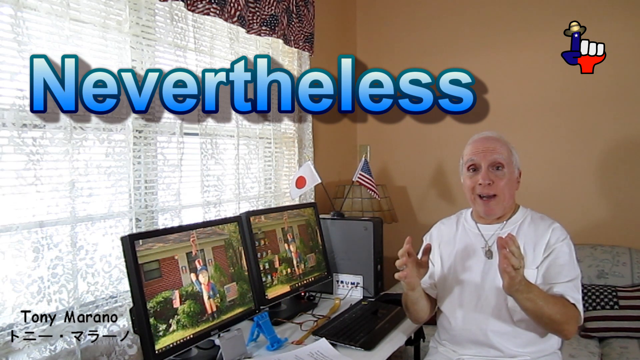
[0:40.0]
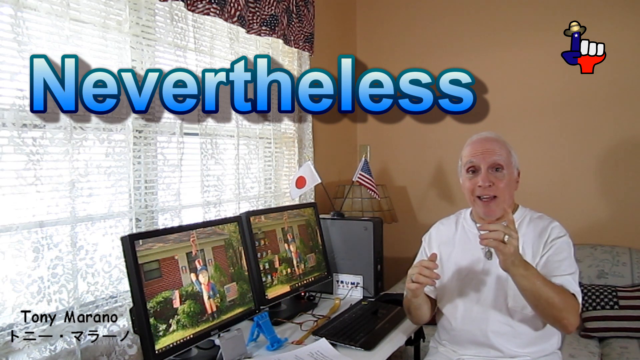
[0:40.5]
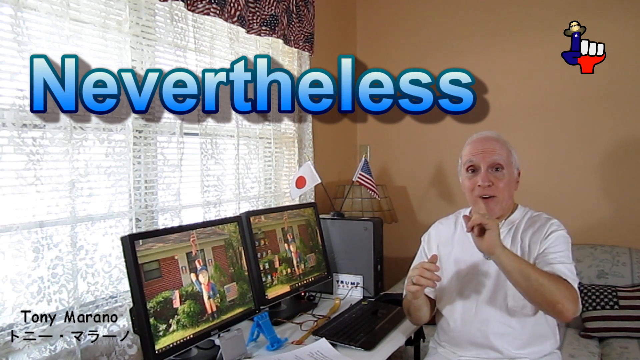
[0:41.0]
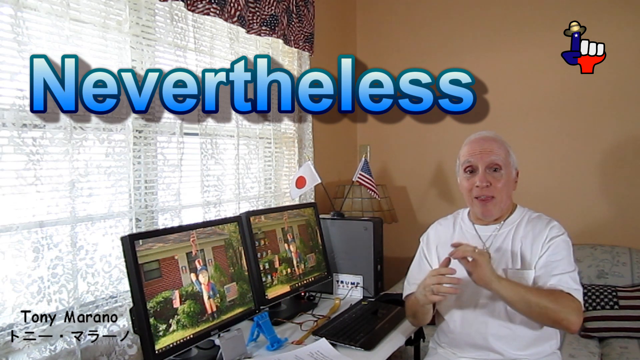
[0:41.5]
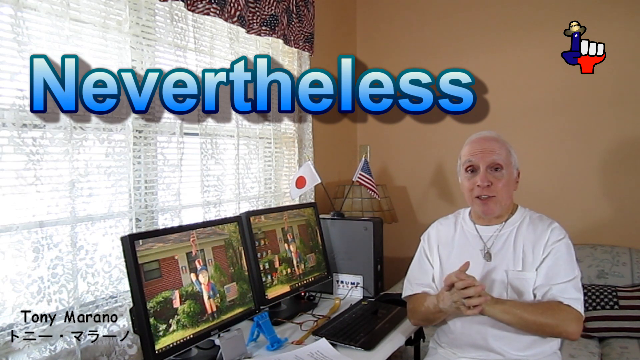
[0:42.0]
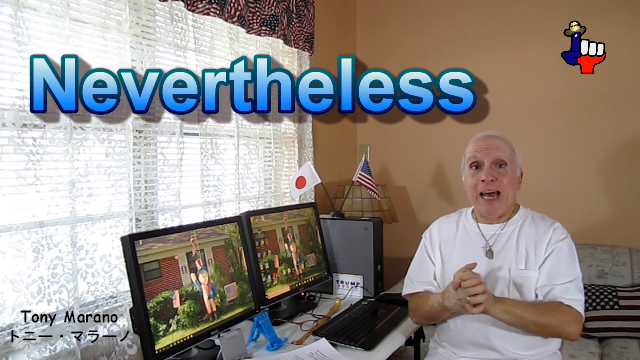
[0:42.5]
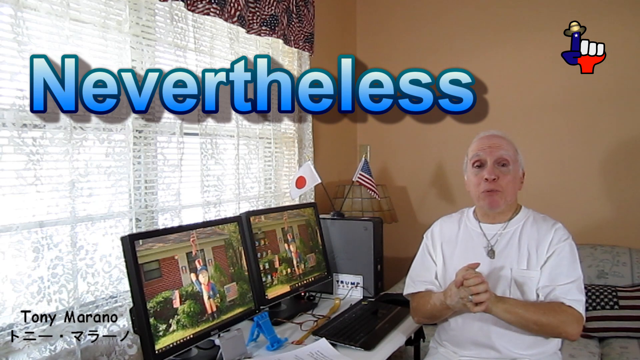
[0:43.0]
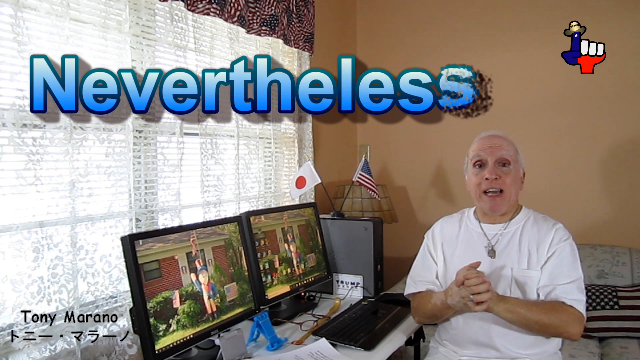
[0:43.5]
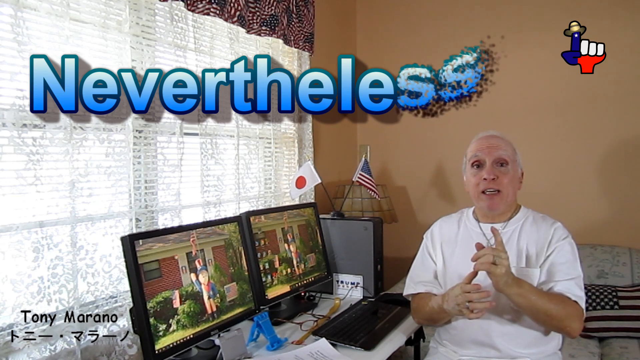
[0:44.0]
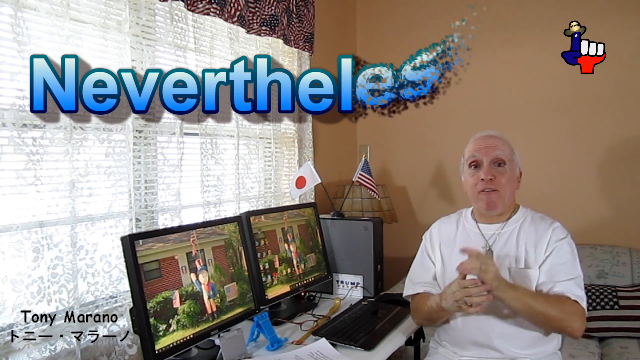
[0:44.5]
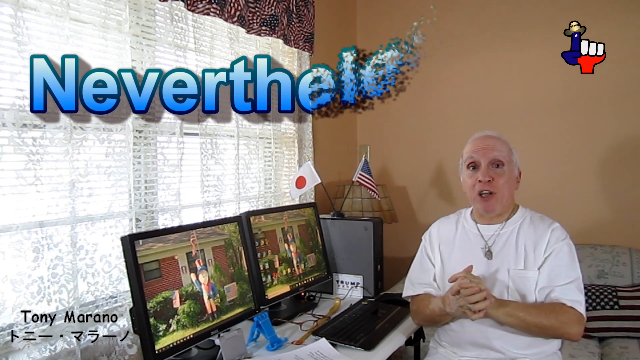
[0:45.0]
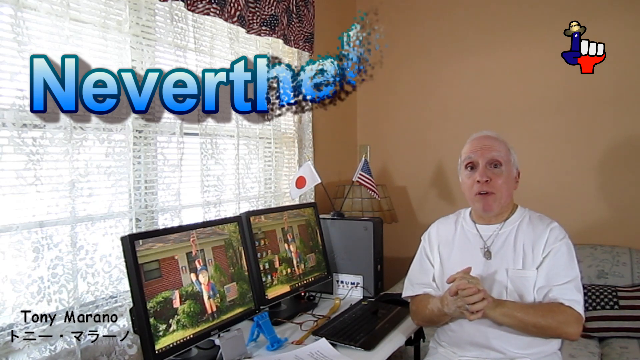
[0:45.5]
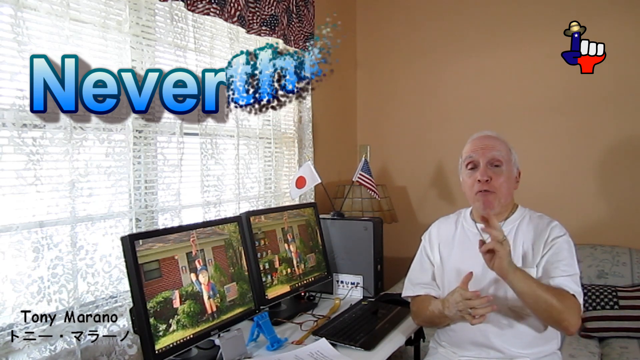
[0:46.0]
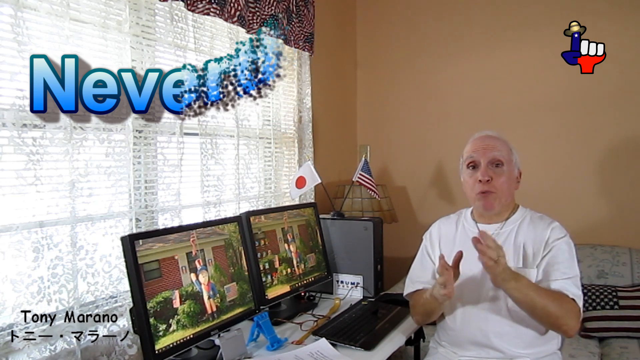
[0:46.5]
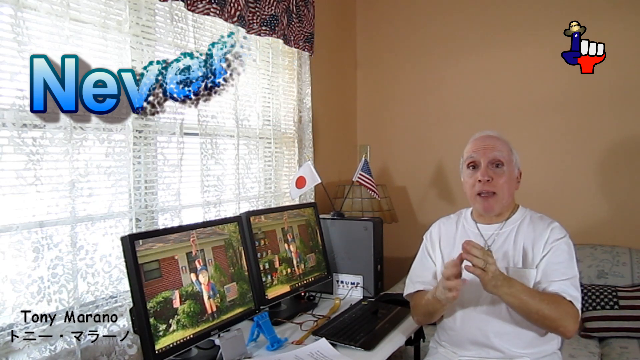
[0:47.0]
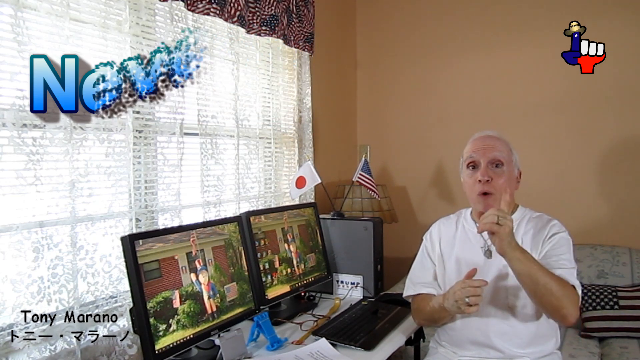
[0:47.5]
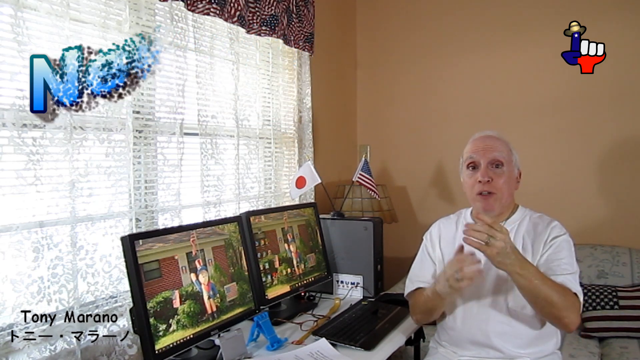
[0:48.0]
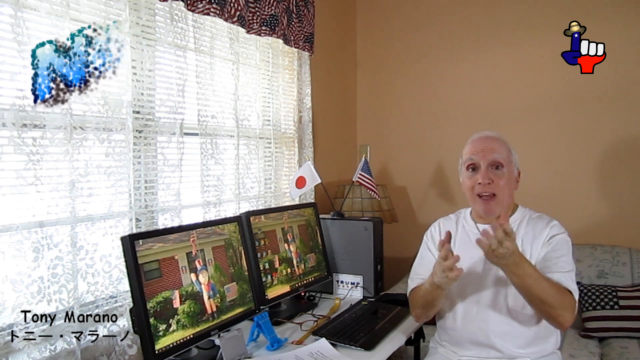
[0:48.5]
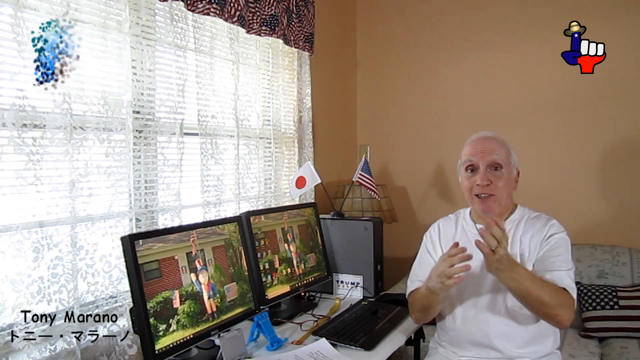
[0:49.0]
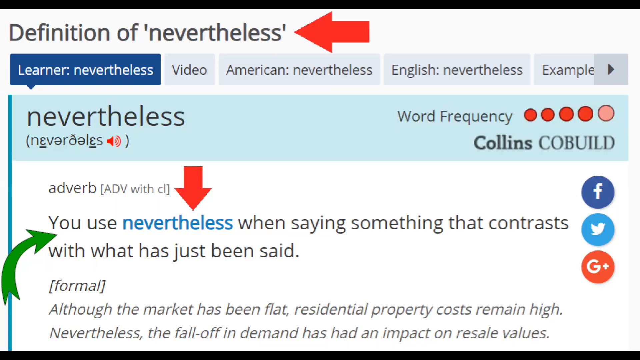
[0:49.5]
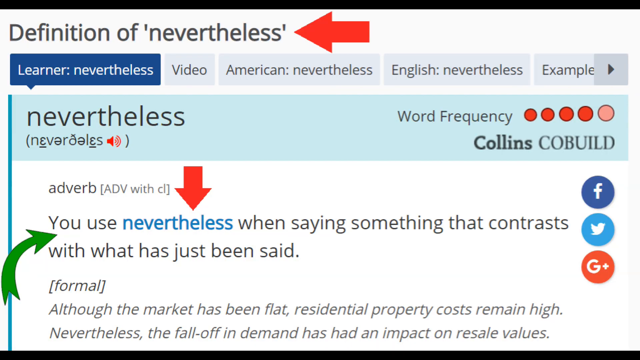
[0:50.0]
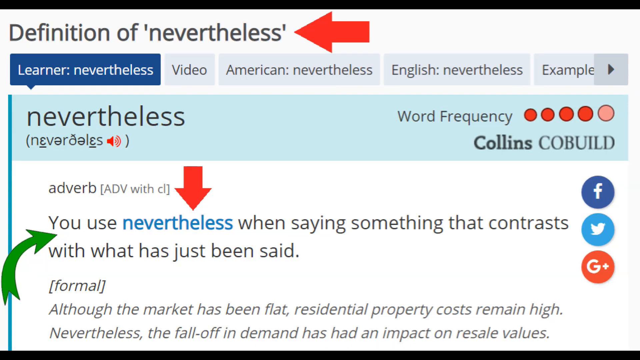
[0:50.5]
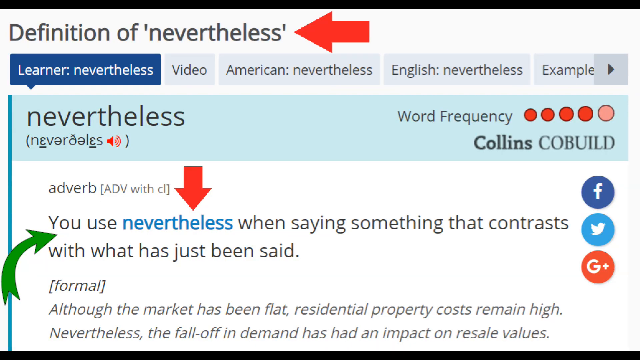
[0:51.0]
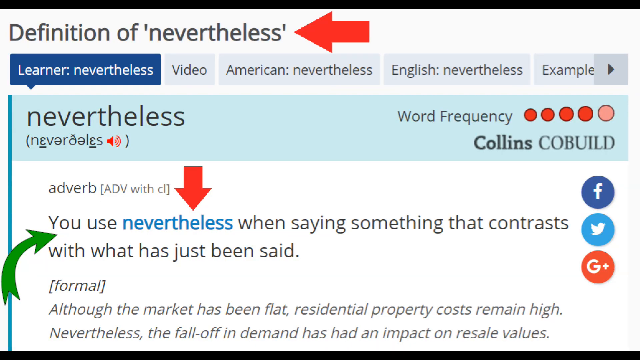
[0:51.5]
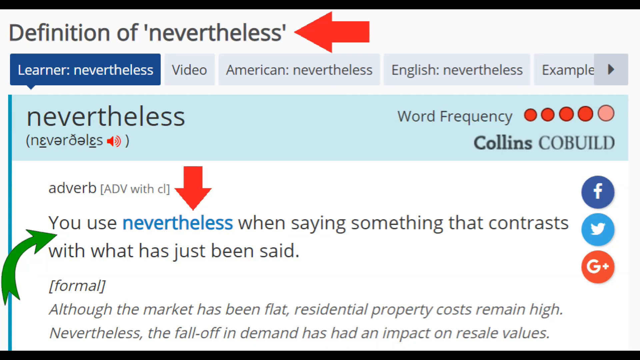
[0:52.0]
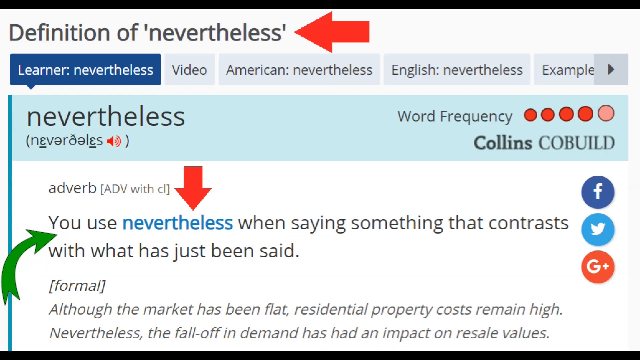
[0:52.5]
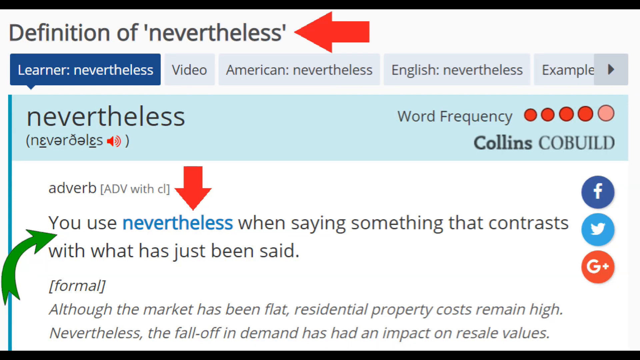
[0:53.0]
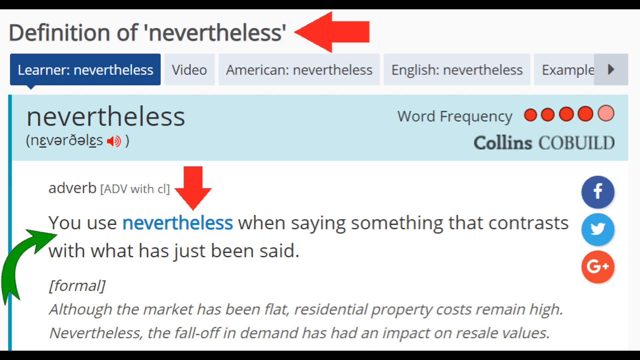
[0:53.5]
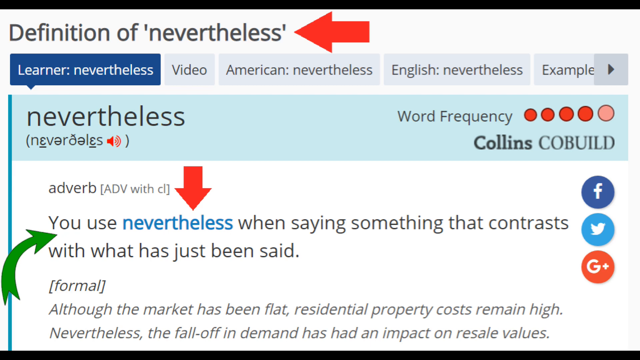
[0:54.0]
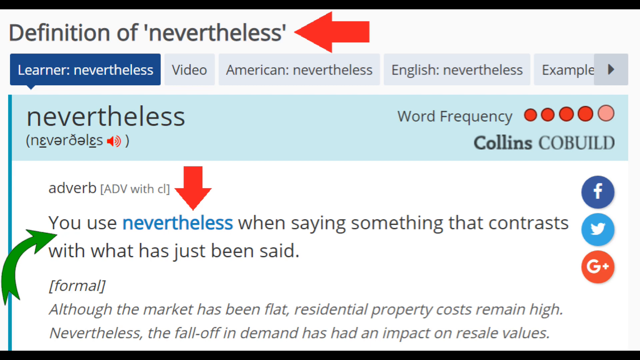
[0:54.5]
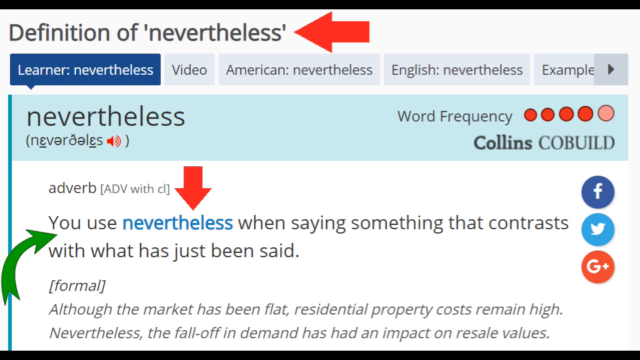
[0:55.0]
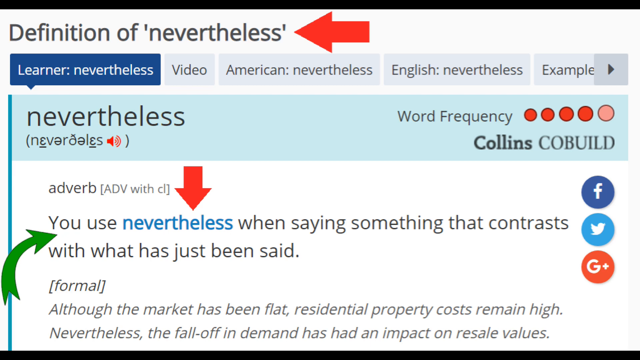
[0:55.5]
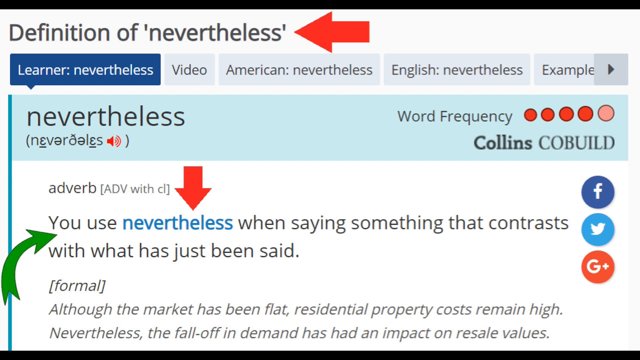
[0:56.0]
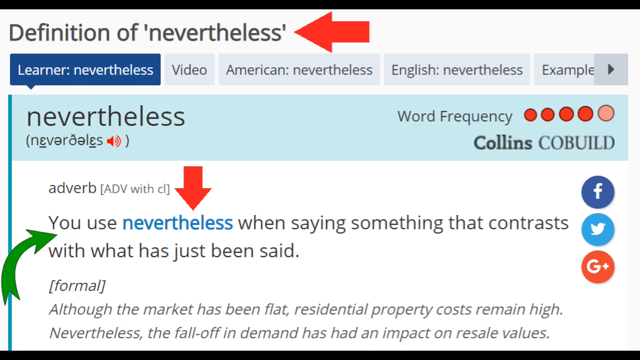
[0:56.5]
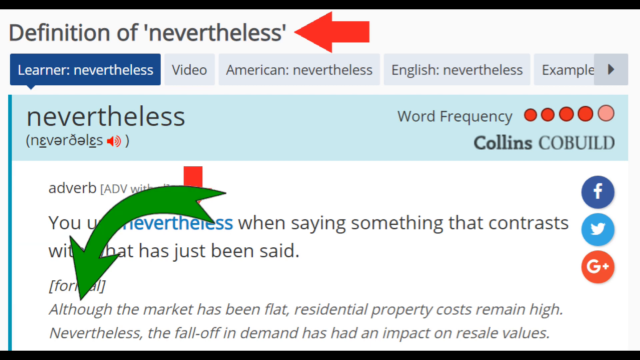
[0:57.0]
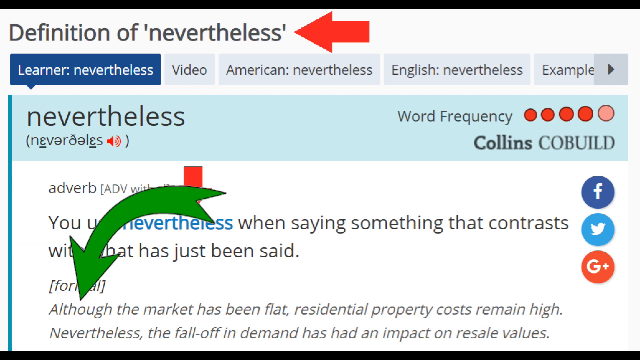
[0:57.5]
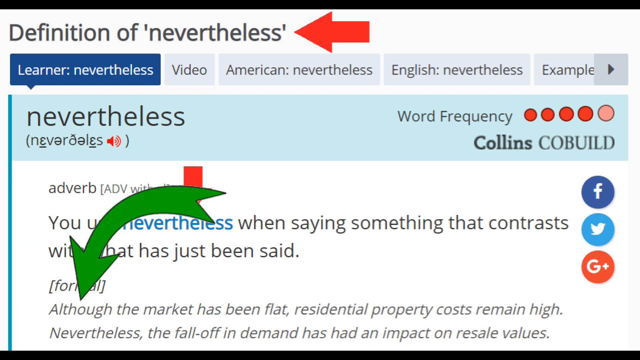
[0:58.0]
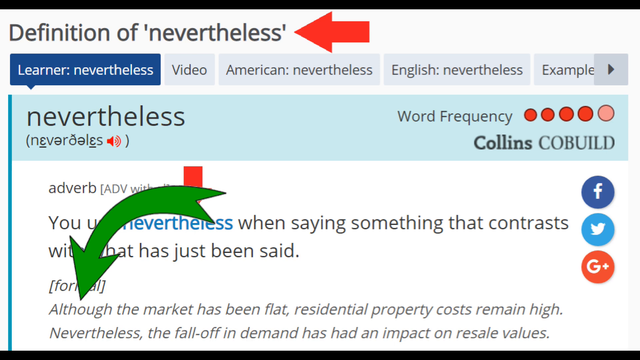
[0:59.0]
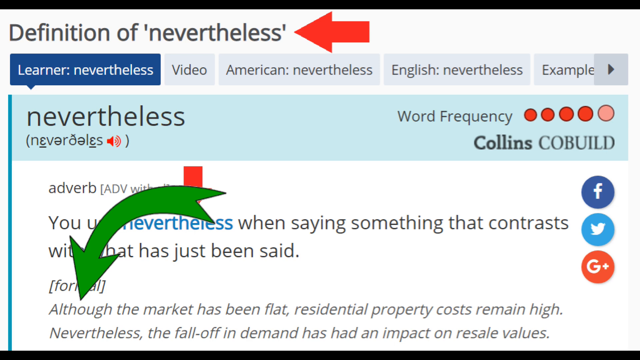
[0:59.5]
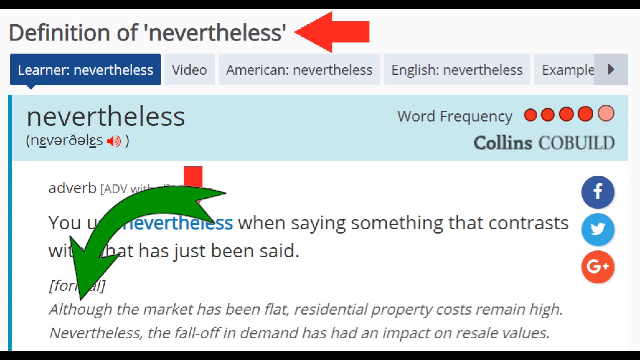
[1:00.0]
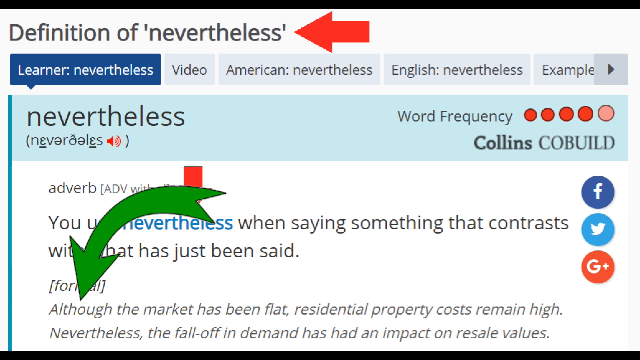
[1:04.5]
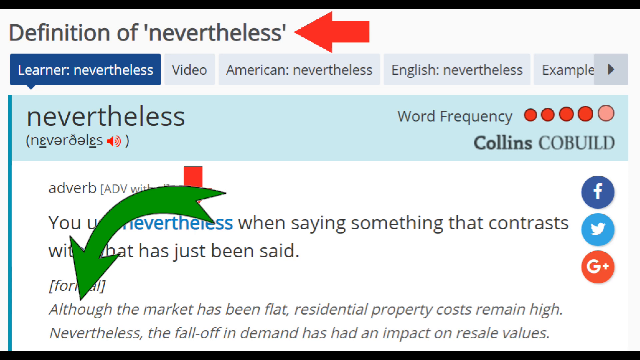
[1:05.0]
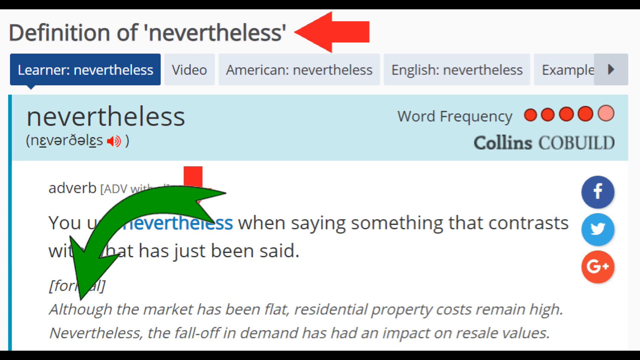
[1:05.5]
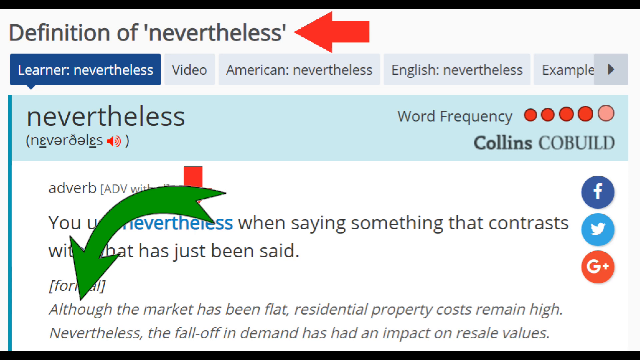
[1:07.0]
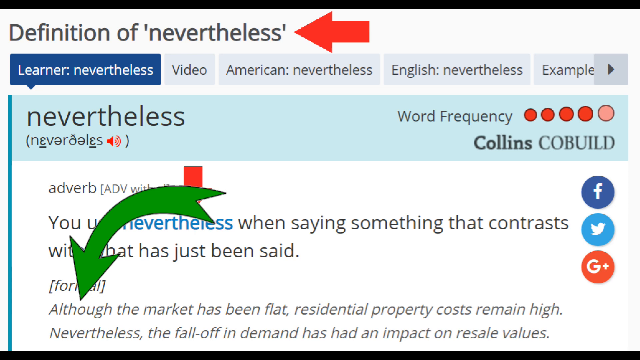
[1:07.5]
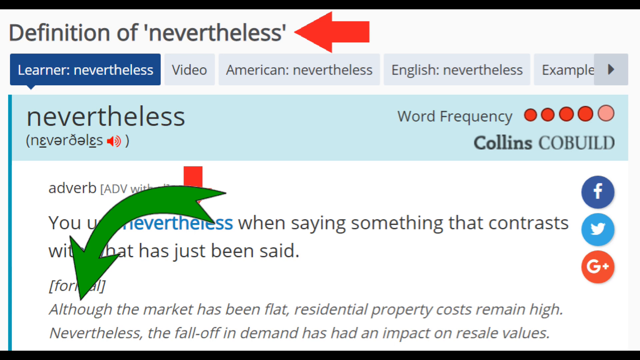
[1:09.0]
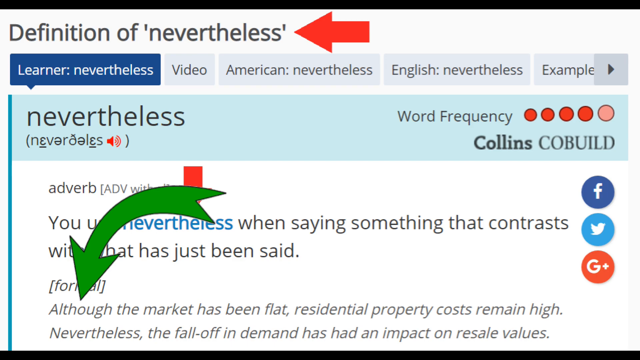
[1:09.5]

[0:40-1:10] A man sits on the right side of the screen, facing and speaking directly into the camera. He has short white hair and wears a short-sleeved white shirt and a necklace with a big charm. To his right is a white computer desk with two desktop monitors and one keyboard in front of one of them. To the right of that is a computer tower with two small flags on top, an American flag and a Chinese flag. The screen then turns white, and in the top left-hand corner it reads "definition of nevertheless." Underneath, it reads "a nevertheless adverb. You use nevertheless when saying something that contrasts with what has just been said." A red arrow points down to the word "nevertheless," which is highlighted in blue.